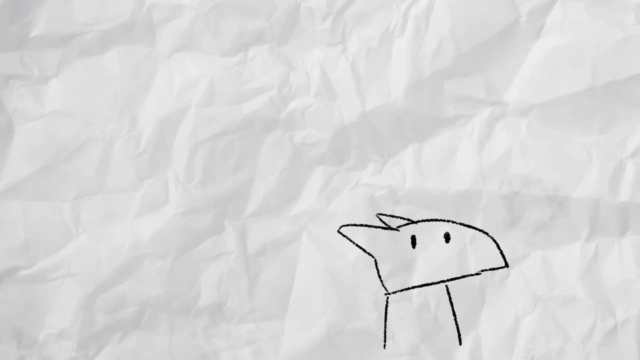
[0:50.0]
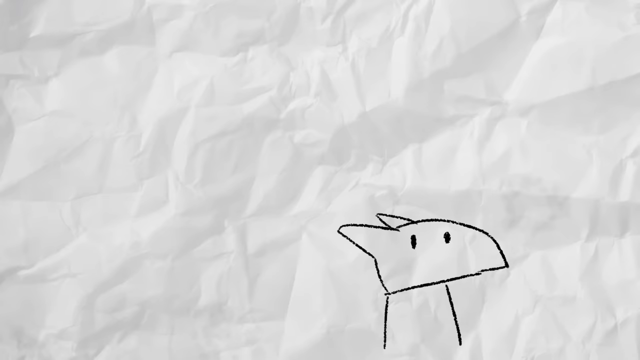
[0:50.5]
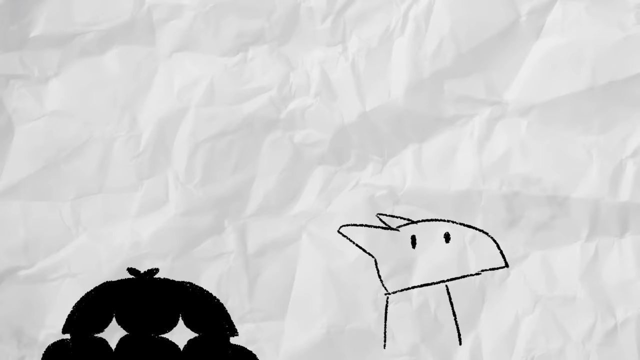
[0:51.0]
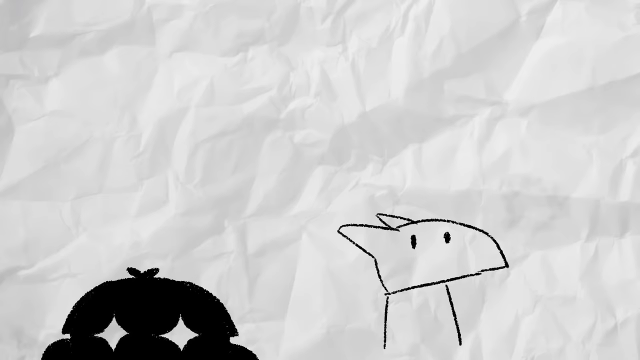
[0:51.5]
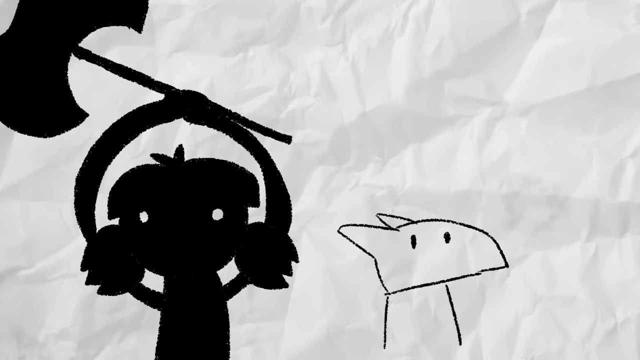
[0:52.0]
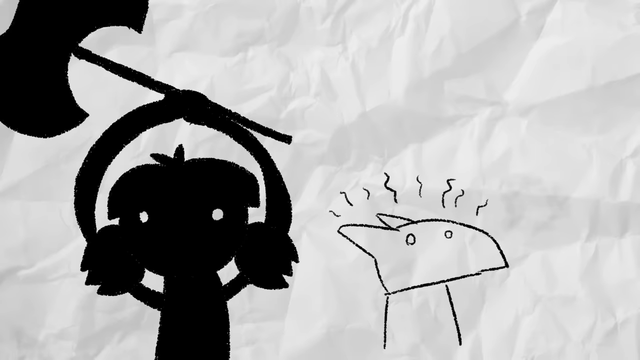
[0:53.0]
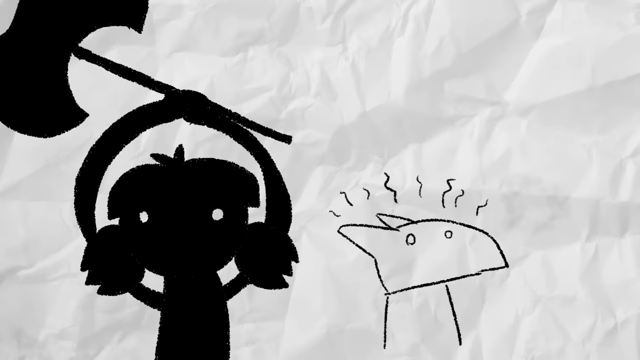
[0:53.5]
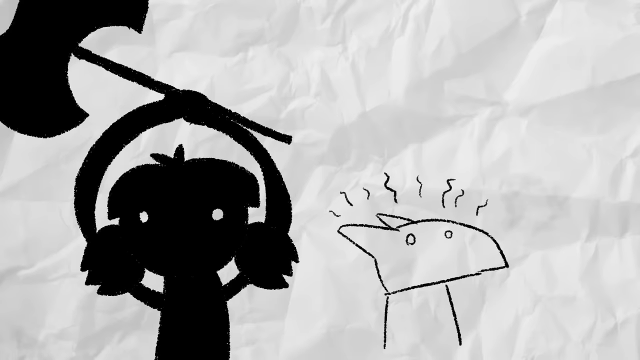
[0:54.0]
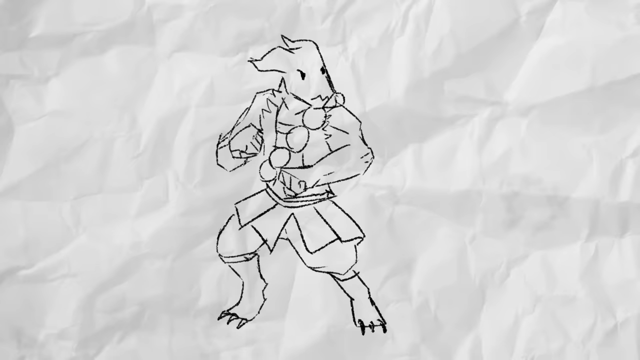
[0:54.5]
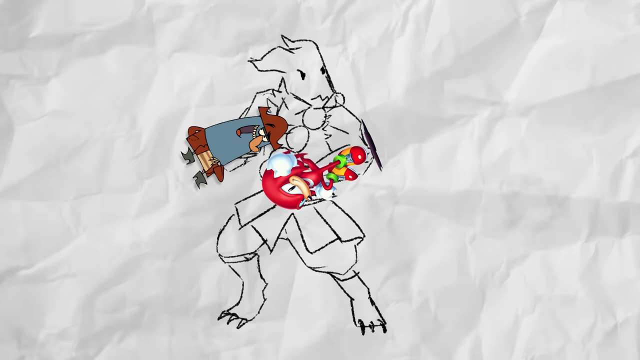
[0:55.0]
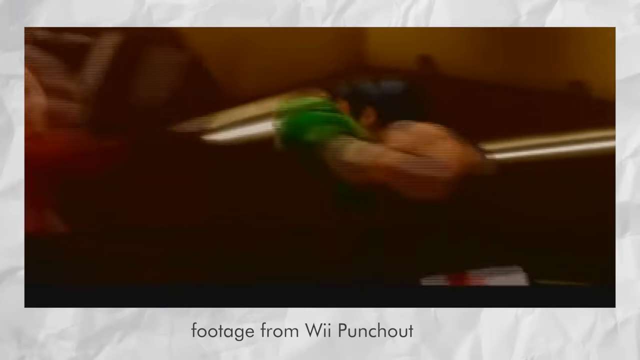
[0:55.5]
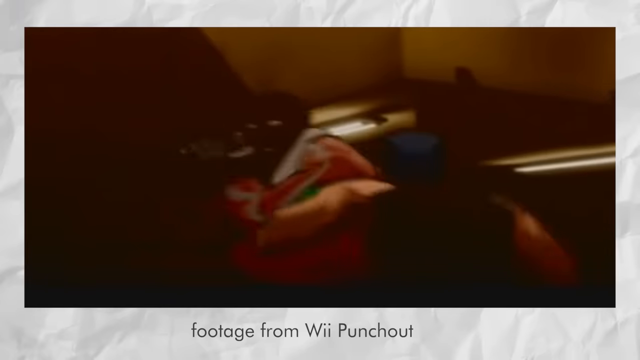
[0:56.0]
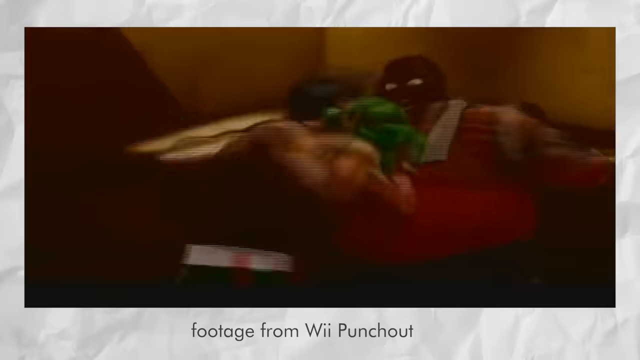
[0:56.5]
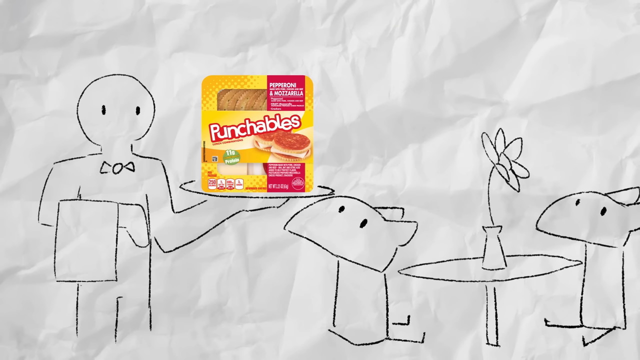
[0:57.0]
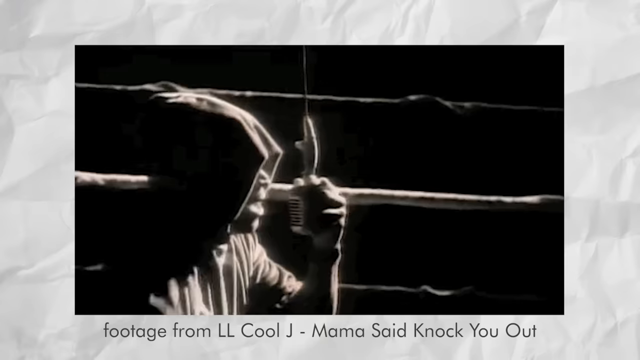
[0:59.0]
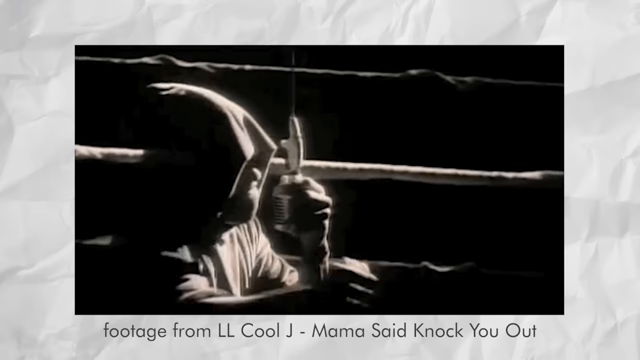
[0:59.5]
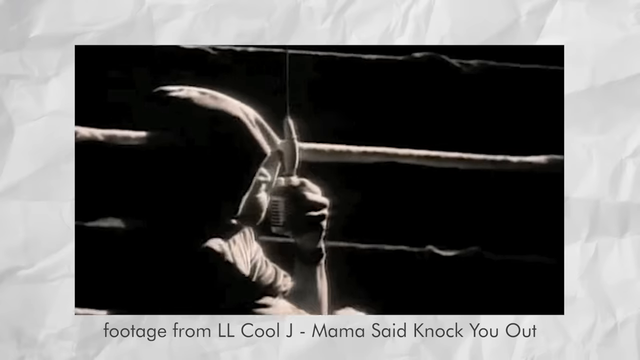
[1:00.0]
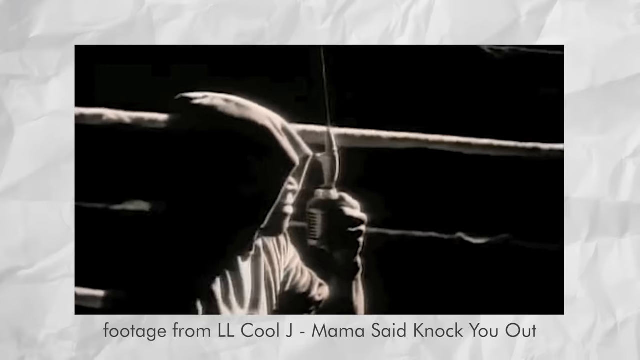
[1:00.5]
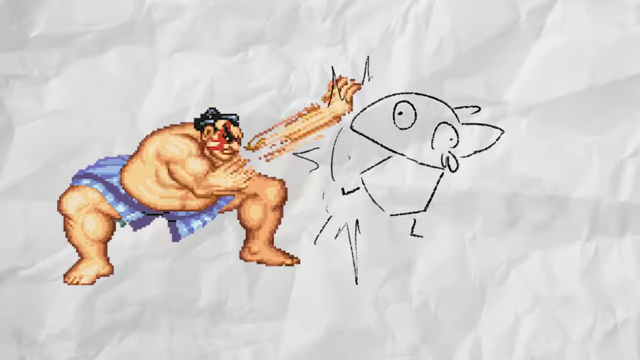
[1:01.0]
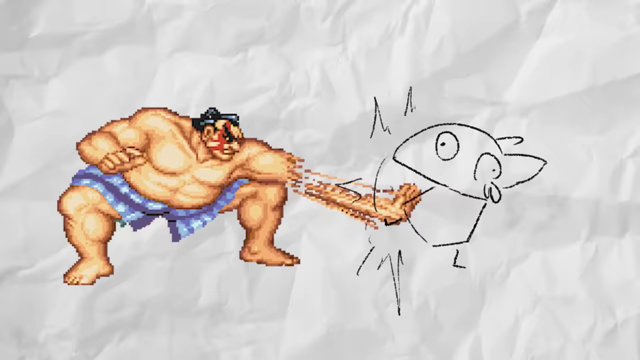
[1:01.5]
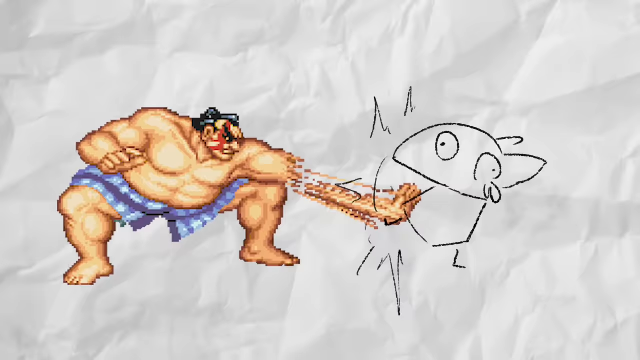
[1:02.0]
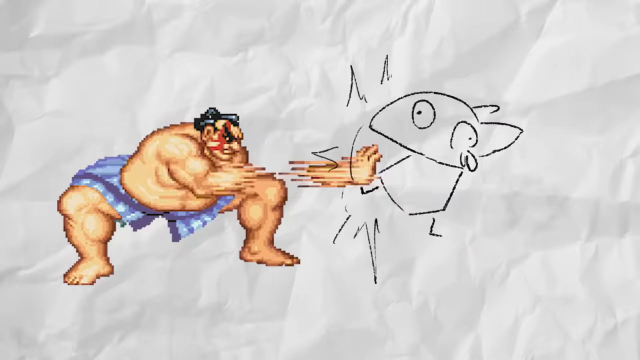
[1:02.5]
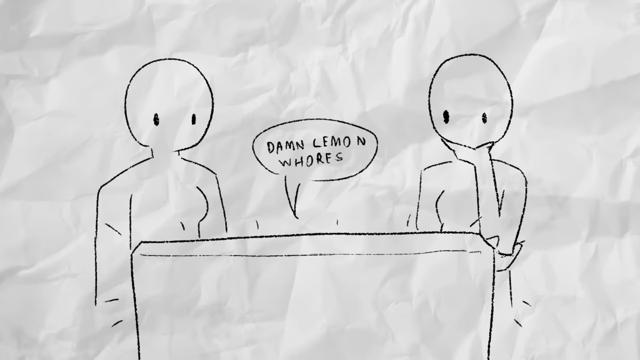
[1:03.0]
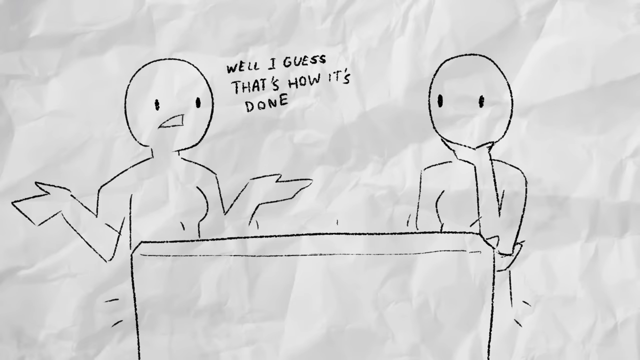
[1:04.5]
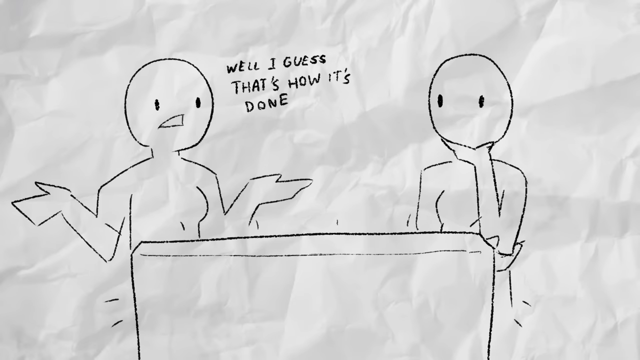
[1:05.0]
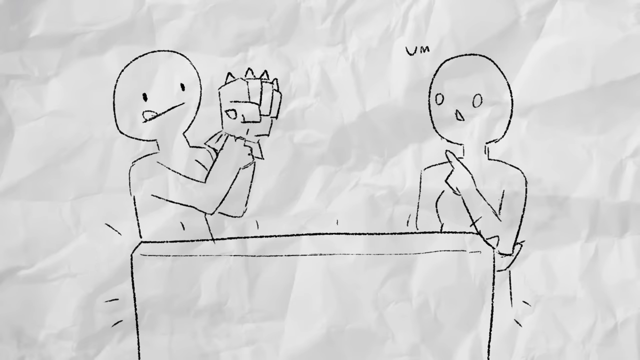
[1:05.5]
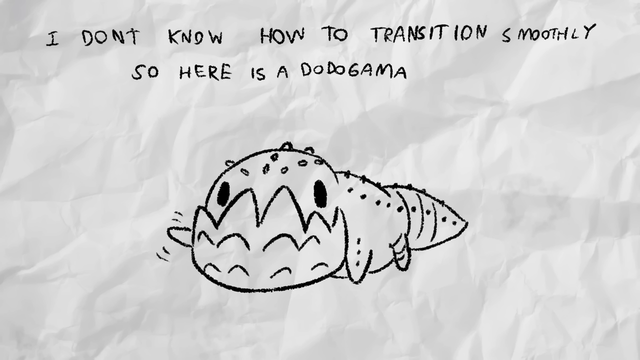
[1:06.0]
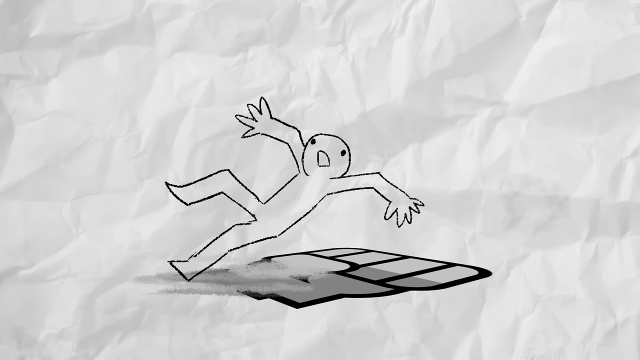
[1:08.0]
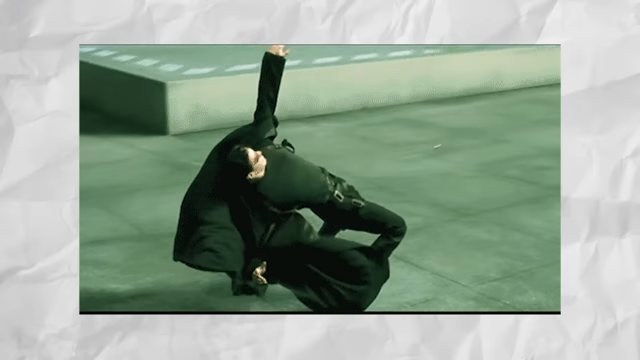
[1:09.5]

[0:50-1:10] On the crinkled white paper, just left of center, a small crude drawing comes up: first just two lines, then on top a flat head that extends to the right and humps up across the top, with two ears and two black eyes. Creeping up behind him is an all-black shadowy creature holding a big battle axe. Little lines appear above the head of the one on the right side, as if he is alert. Then the big drawn lizard person is shown holding two of them. Next comes a video game in which a person with green gloves punches pads that another person is holding. Two of the smaller creatures then sit on the right side at a table with a flower on it, and to the right a crudely drawn waiter holds a pack of punchables. The video cuts to LL Cool J in the ring from the video "Mama Said Knock You Out," with a microphone hanging down; he faces to the right with a hood over his head as he raps, swinging and moving his arms around. E Honda from Street Fighter then appears on the left side facing to the right, hitting the drawn creature from earlier with his fast hits. Two crudely drawn people look at a computer screen; one of them raises a hand and puts a glove on. A little squiggly worm appears, and one of them falls down. Then Neo from the Matrix is shown dodging bullets.